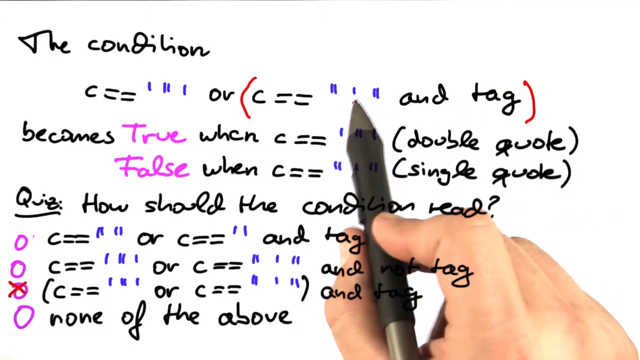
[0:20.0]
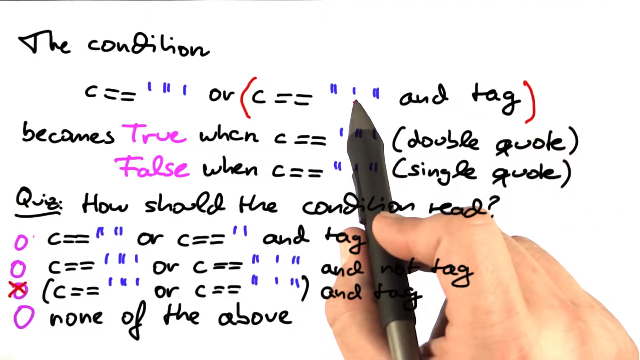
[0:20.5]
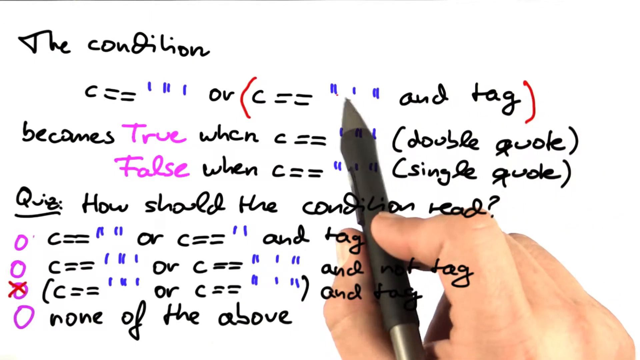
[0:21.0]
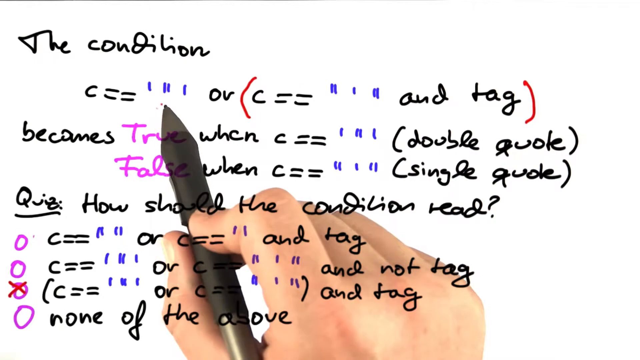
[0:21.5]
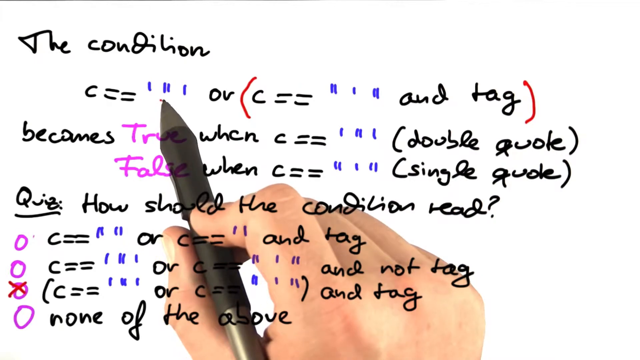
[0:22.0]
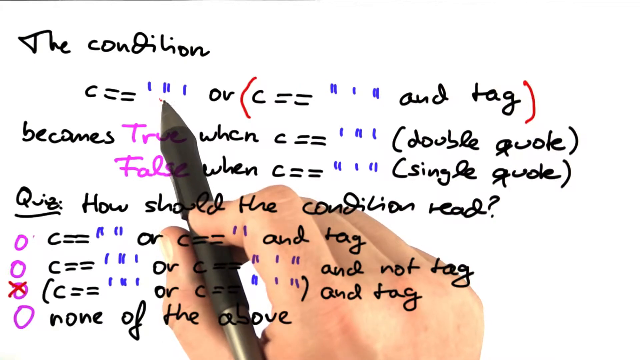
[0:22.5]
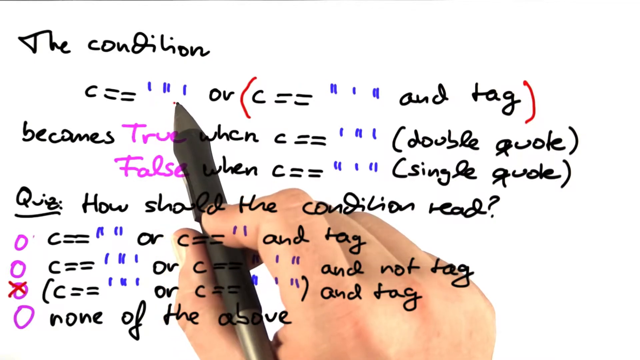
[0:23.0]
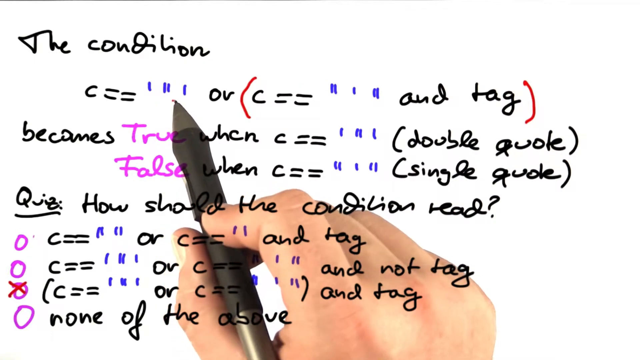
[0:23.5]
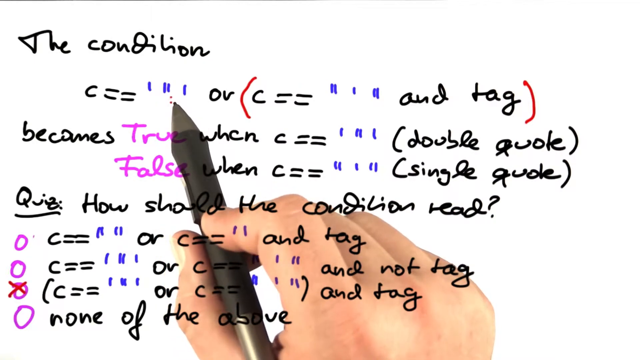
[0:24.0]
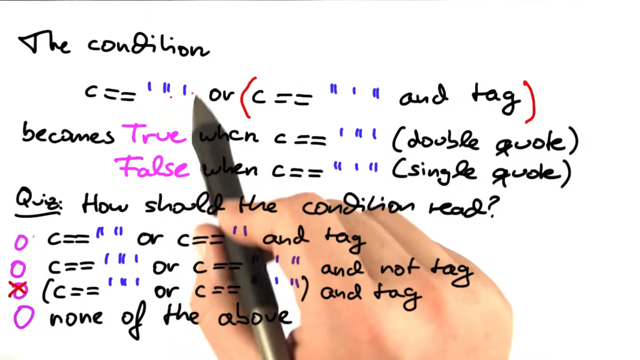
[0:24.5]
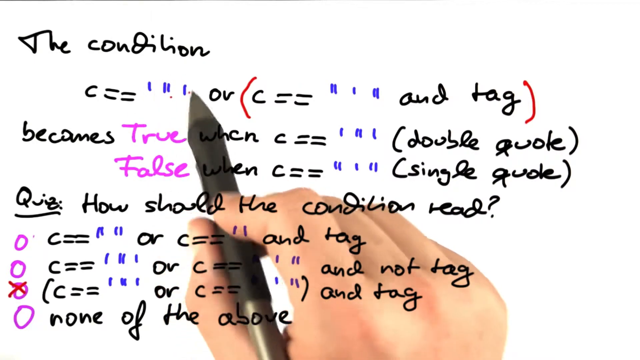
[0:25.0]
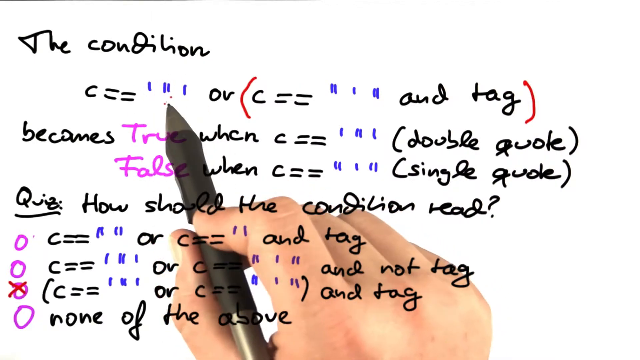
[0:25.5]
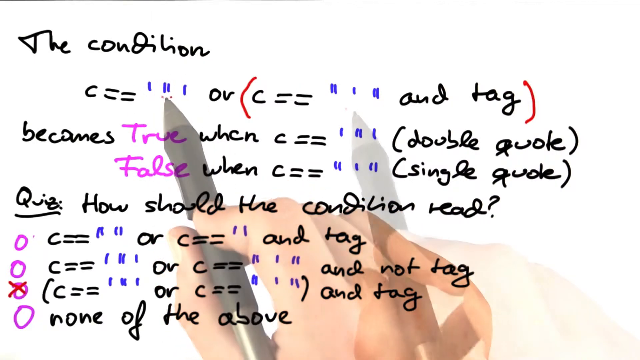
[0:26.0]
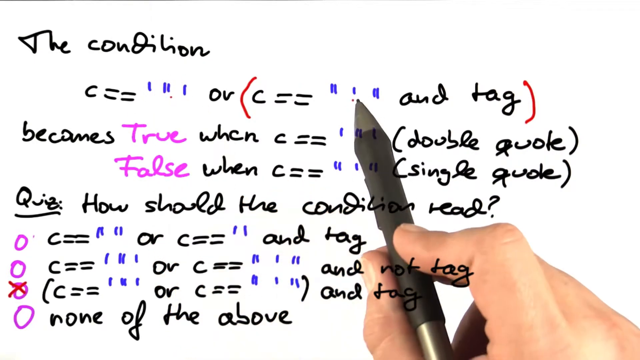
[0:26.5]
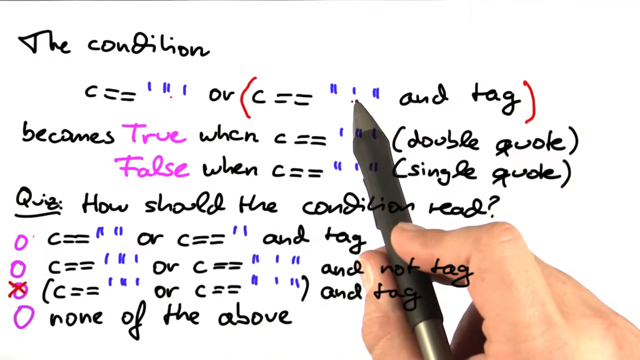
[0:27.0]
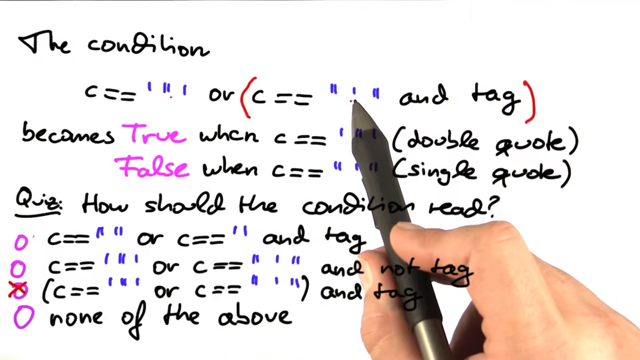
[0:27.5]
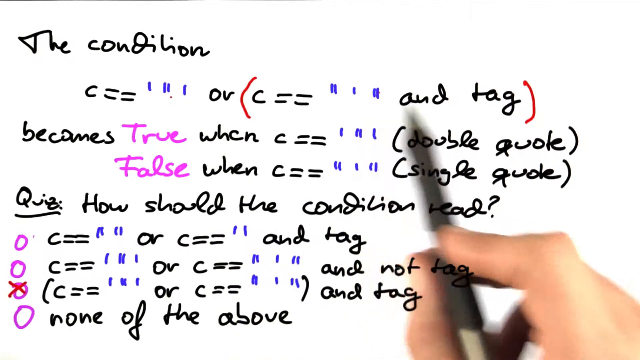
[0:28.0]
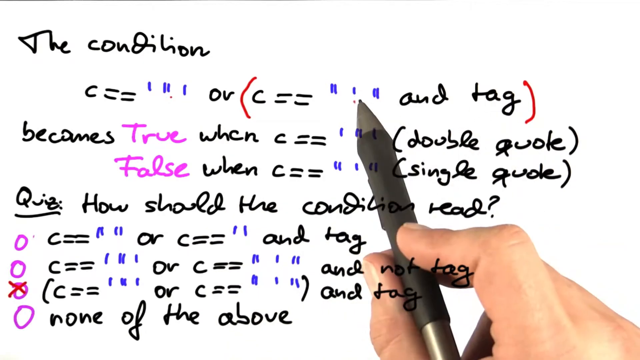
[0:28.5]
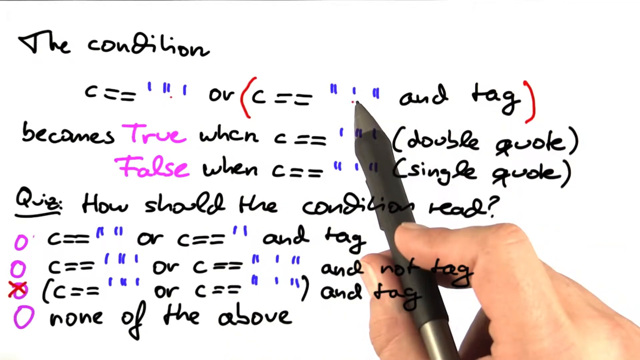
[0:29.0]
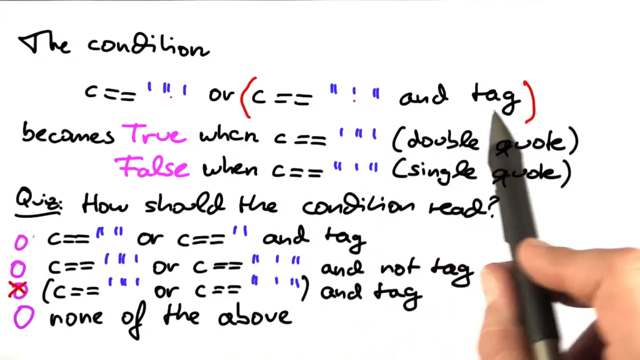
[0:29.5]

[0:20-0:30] The pen is just right of center, coming up, with its silver tip and black grip. Toward the bottom, a little of the silver part of the pen shows from under the black grip. The thumb is on the left side of it, with a little of the thumbnail visible down to the side of the first knuckle. The pointer finger goes up, its back visible, then bends at the knuckle down to the left, pushing down with the fingertip on top of the pen. Only a little of the first joint of the other fingers shows. The pen points at one of the small blue lines, moves a little to the left, points at the blue lines on that side and makes a small circle motion around them, then goes back to the other one, points, and then points at "tag", moving back and forth across the first line of information.